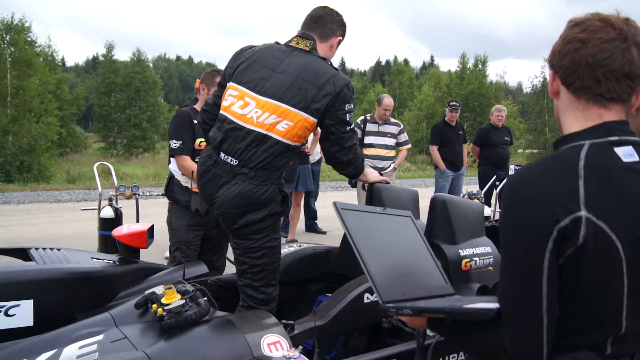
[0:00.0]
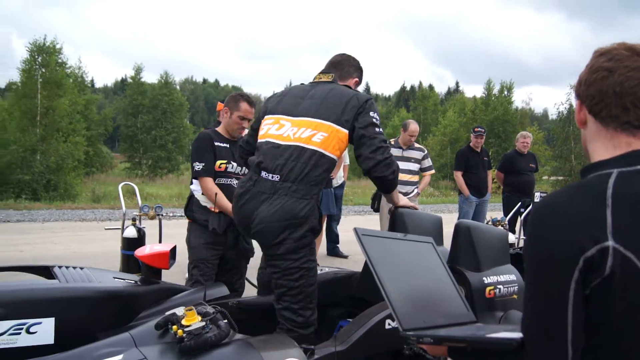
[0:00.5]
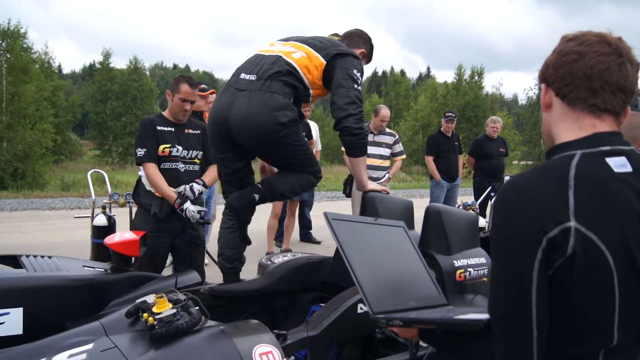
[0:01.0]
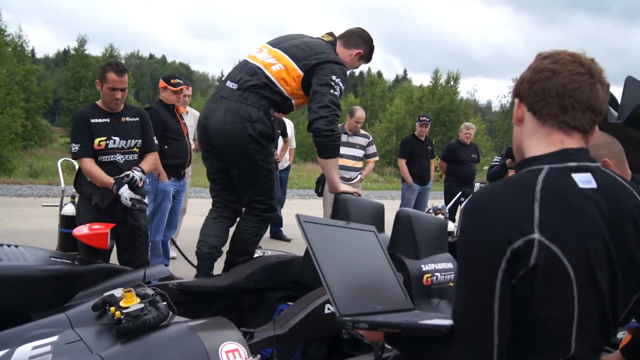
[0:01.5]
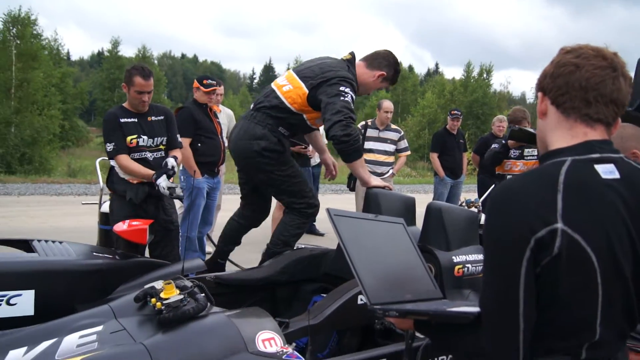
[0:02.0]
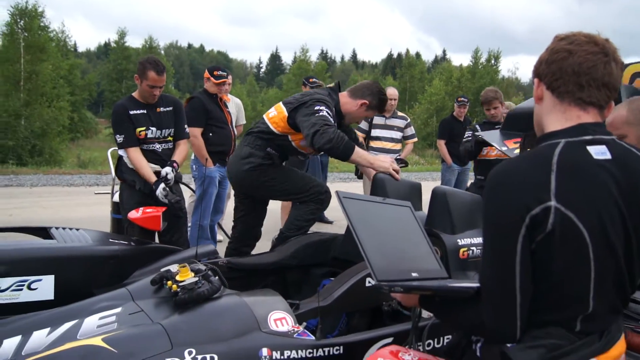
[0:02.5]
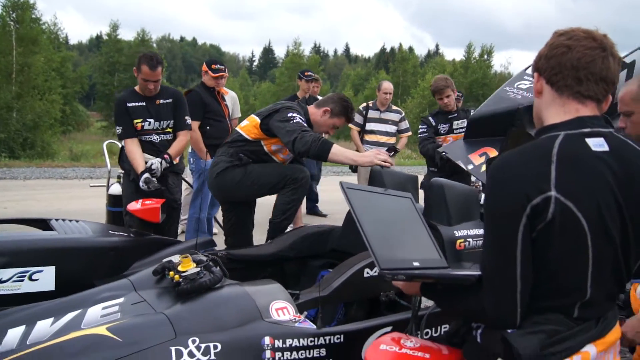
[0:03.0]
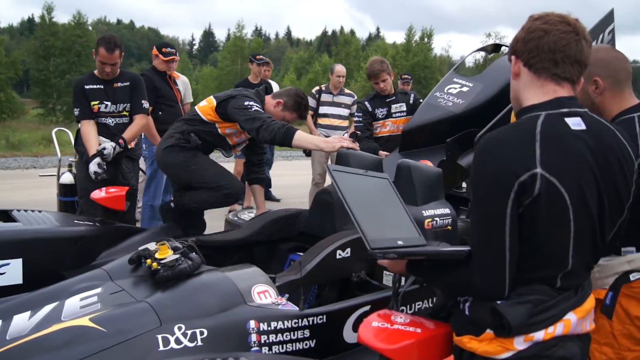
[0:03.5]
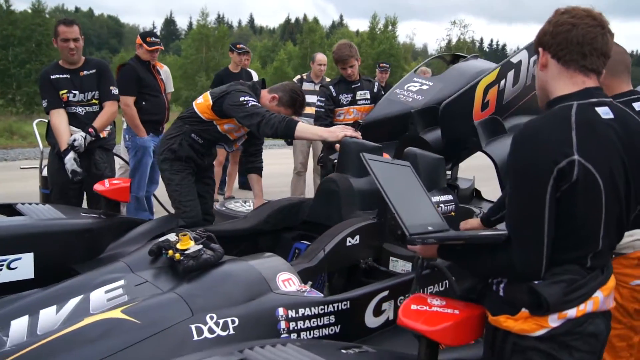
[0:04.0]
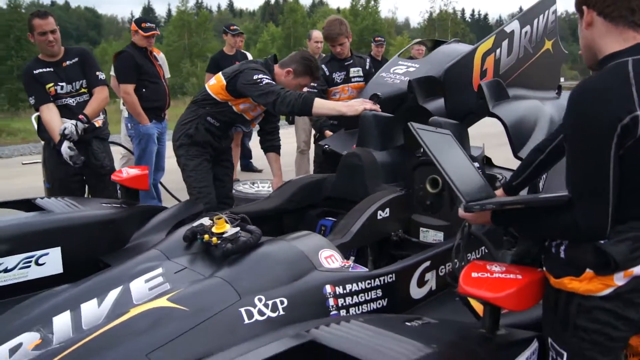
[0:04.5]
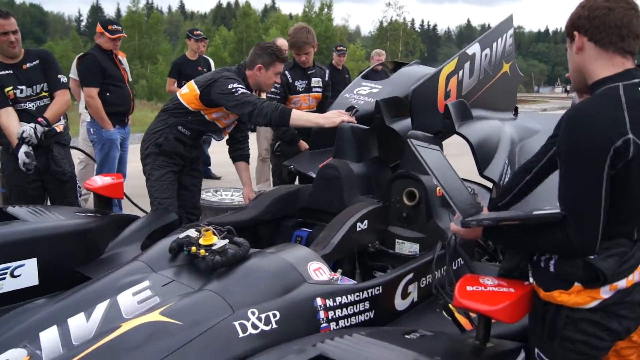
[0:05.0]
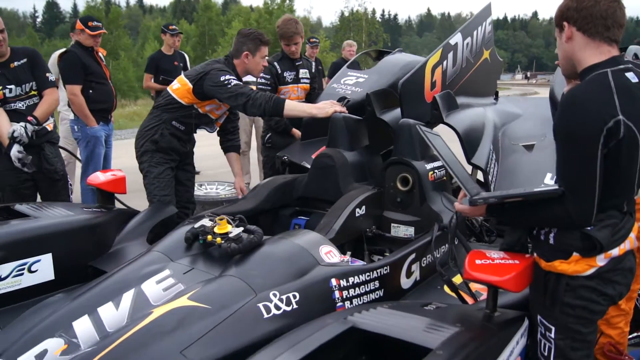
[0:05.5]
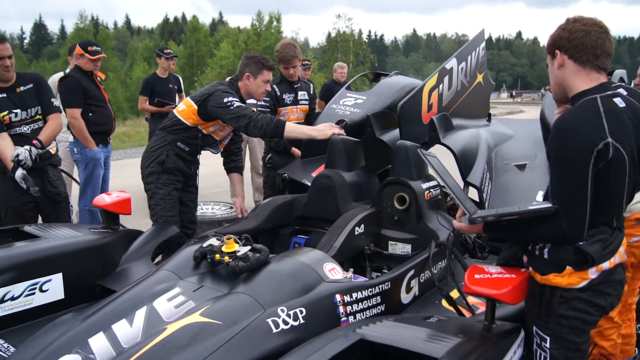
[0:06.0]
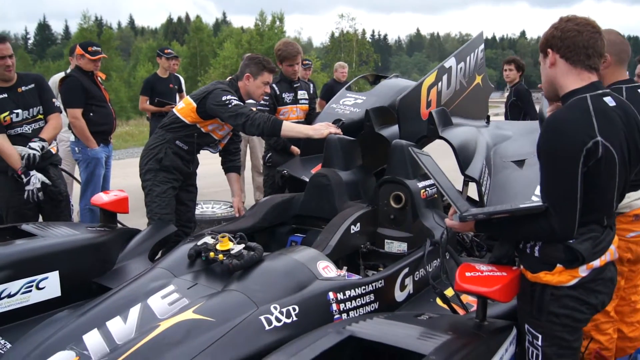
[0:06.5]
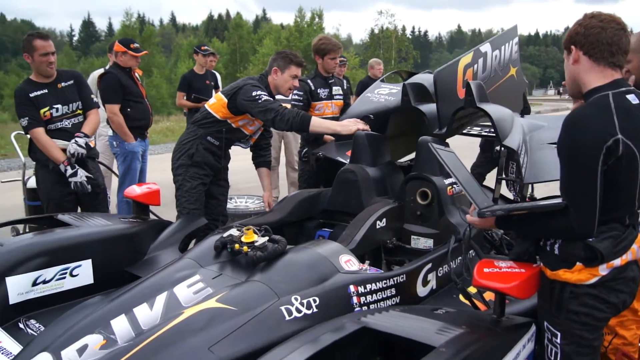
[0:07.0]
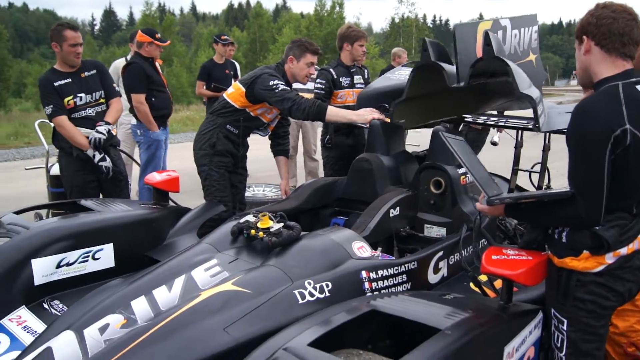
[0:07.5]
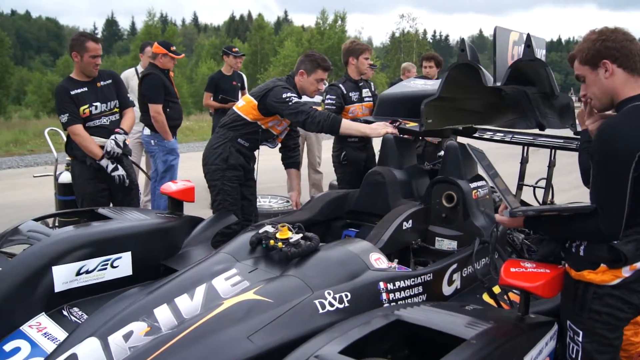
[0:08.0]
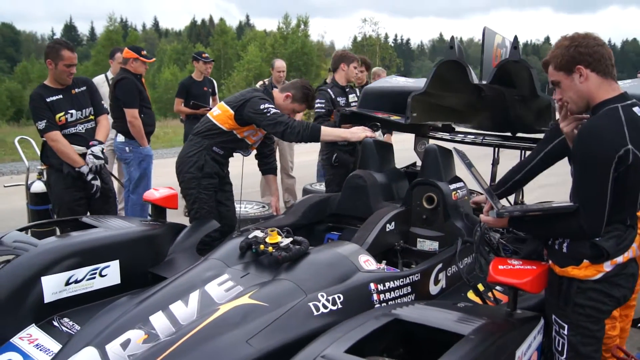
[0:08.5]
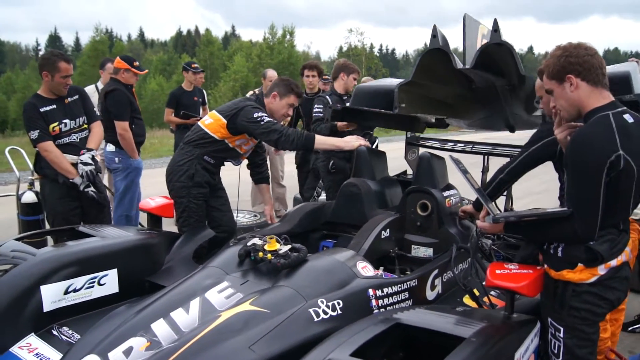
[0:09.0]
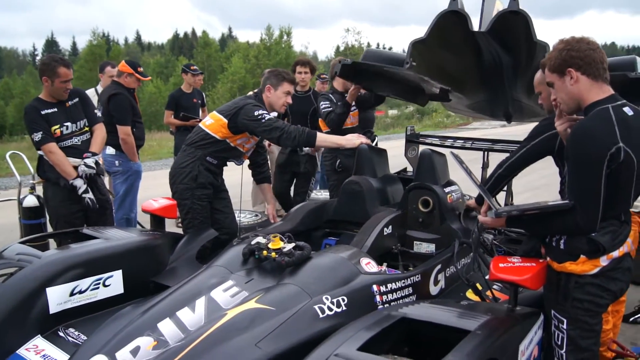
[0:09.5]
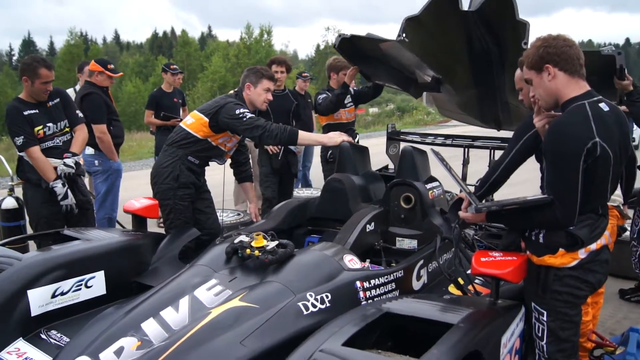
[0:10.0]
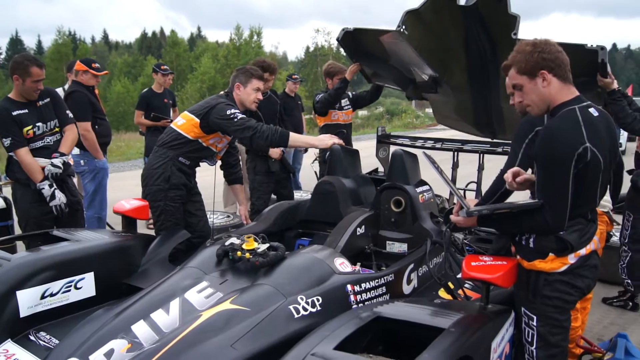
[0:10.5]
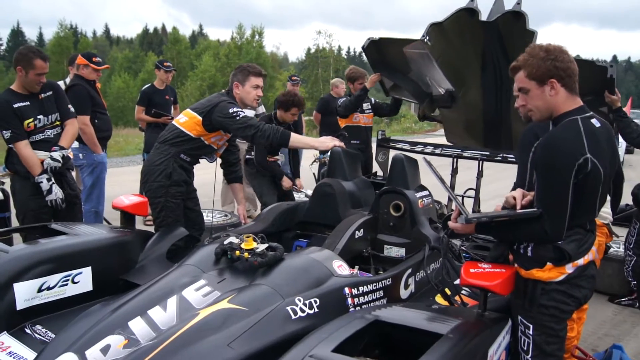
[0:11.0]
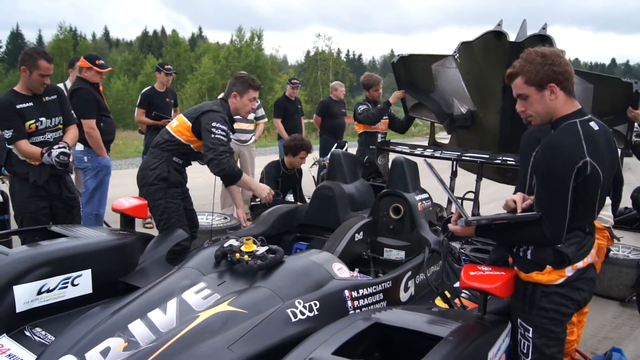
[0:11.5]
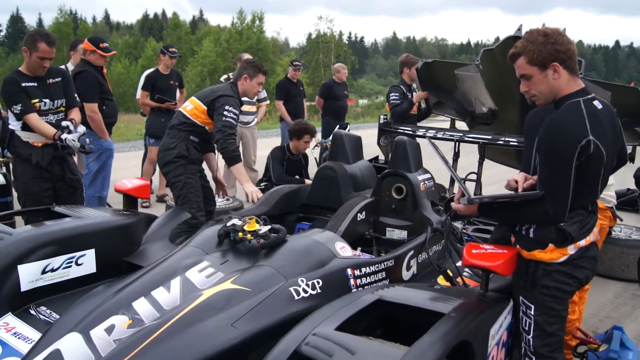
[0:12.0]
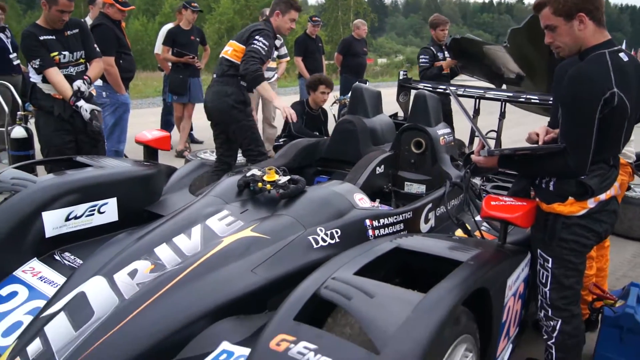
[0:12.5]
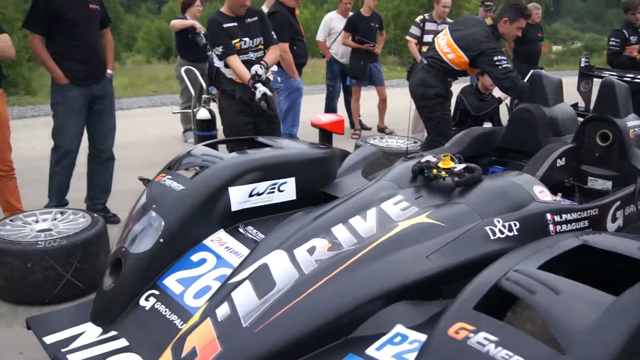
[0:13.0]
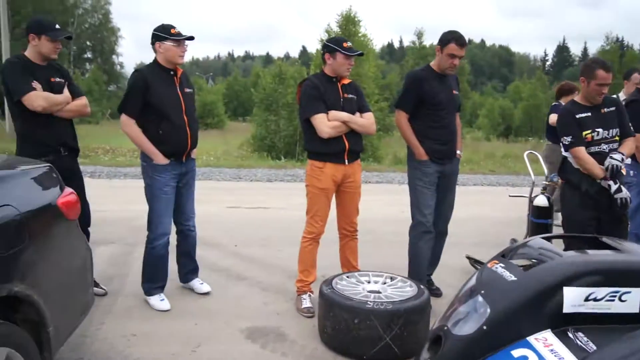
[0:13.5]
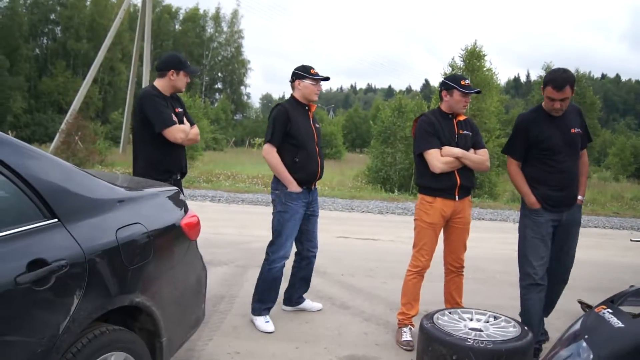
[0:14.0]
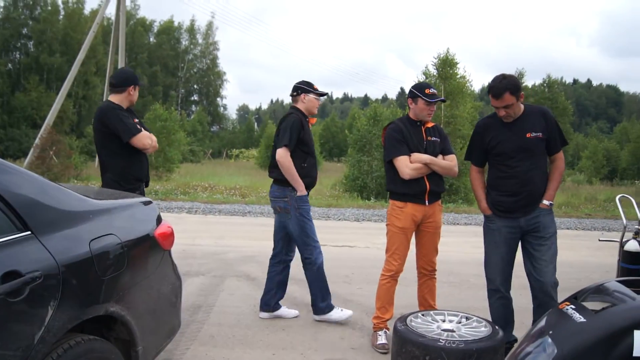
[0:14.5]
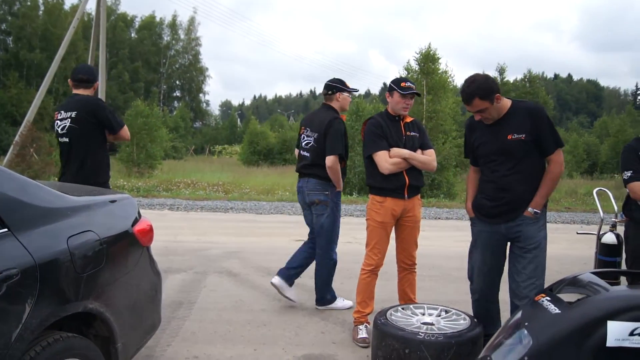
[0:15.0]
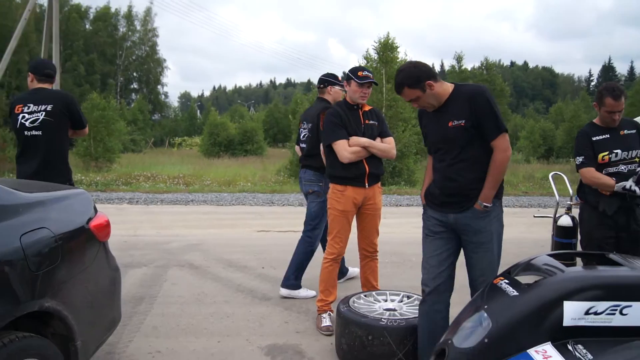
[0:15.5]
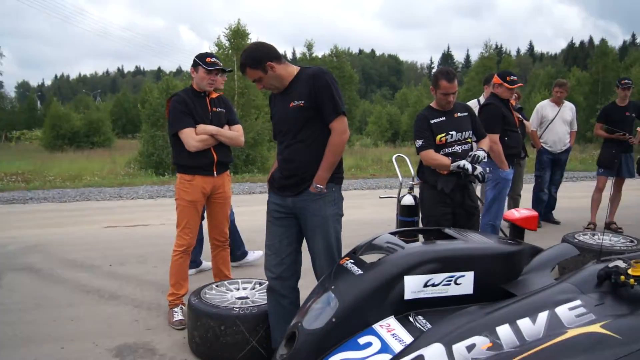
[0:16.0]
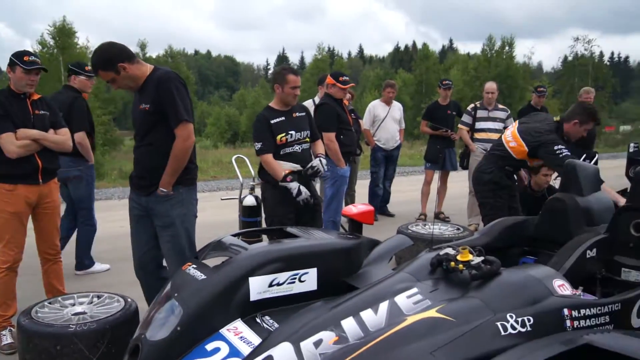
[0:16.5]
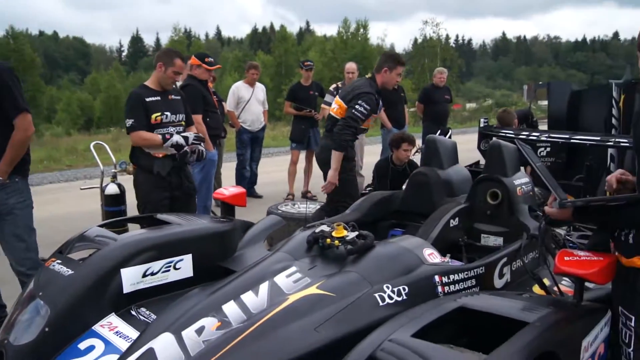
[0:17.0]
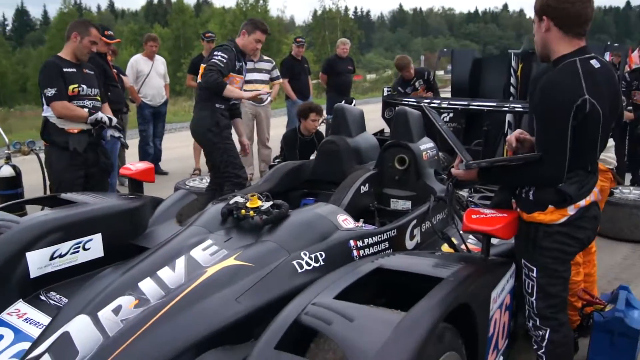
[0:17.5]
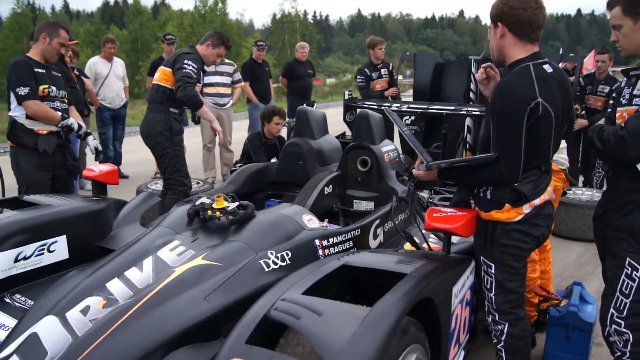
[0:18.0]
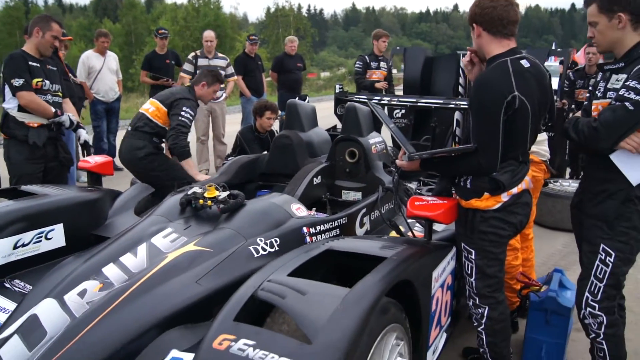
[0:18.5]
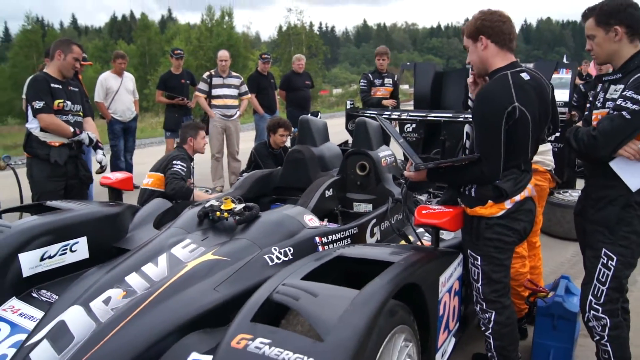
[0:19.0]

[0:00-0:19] A black race car is surrounded by what looks like its team of drivers and assistants. "G-DRIVE" appears on the car as well as on the shirts and hats of the people surrounding it. The car is a matte black and is covered with different sponsor names. The team appears to be examining the car, focusing on the driver's seat and the back area, lifting off what may be a convertible roof or another part of the car. Many men observe or take notes on a laptop; it seems to be a very professional race car team, possibly prepping for a race. They seem to be on an open road, with a dense forest of what look like pine trees in the background and a bright gray sky.